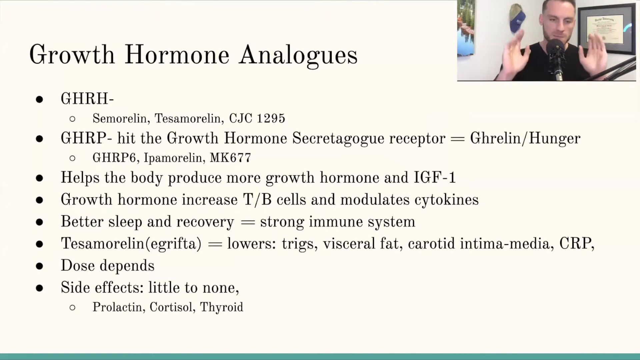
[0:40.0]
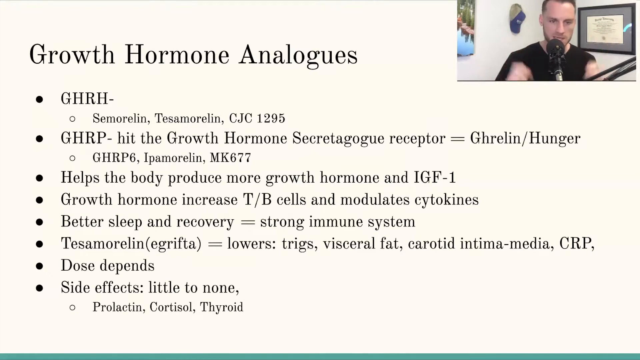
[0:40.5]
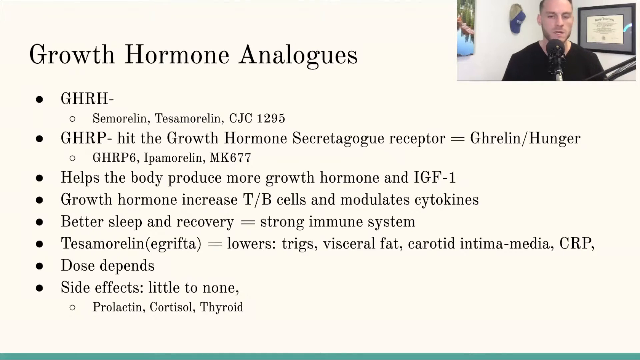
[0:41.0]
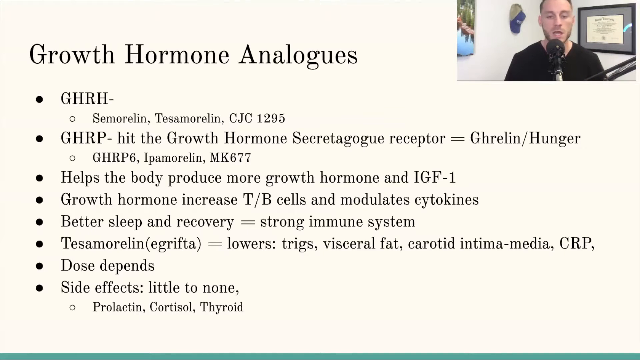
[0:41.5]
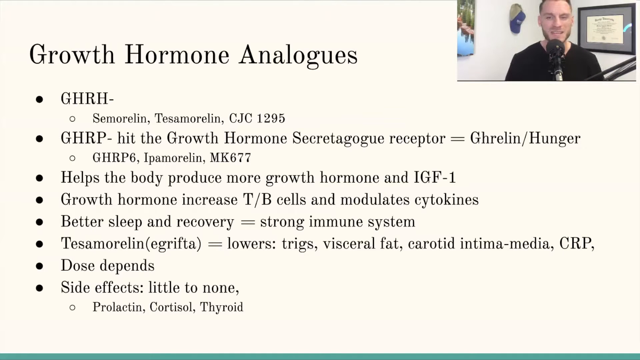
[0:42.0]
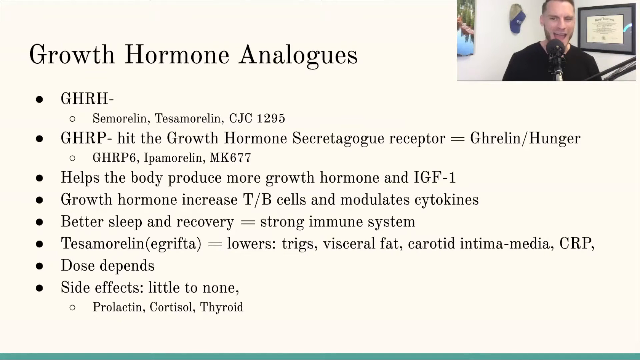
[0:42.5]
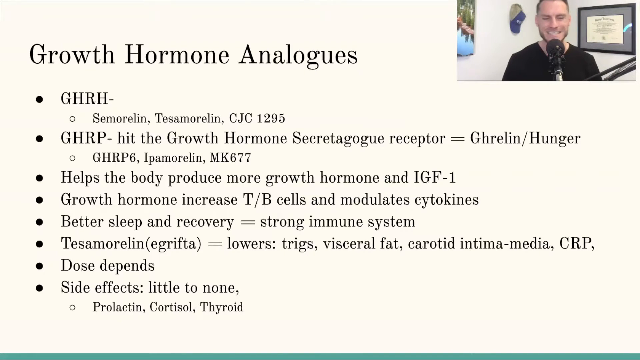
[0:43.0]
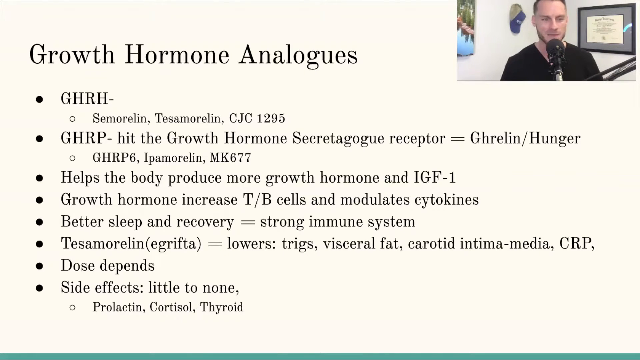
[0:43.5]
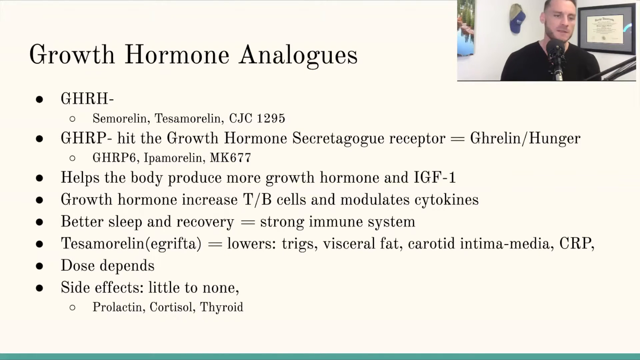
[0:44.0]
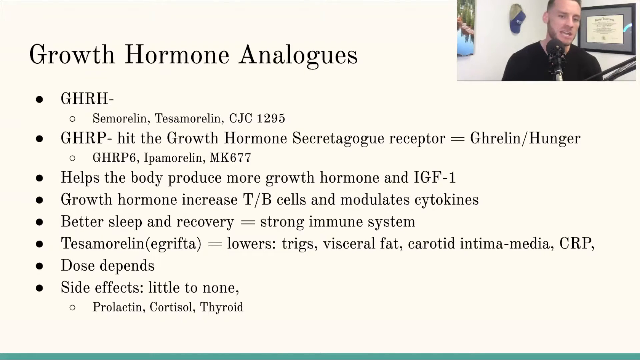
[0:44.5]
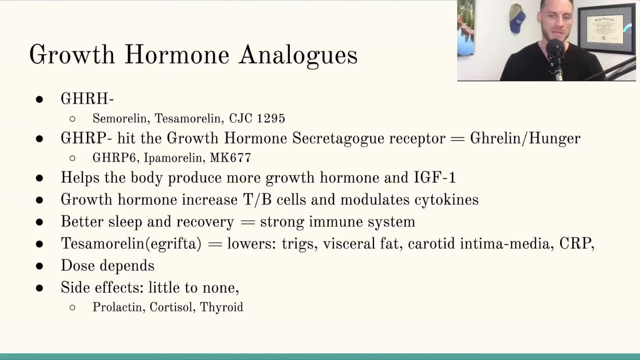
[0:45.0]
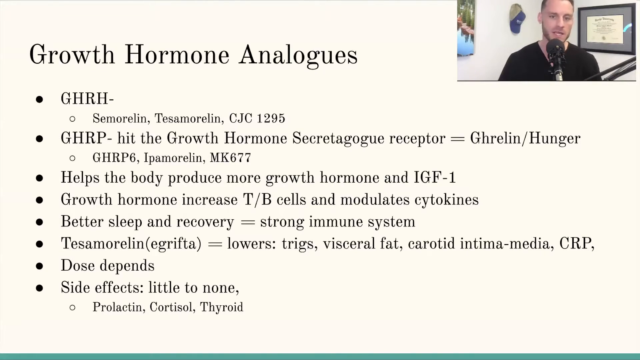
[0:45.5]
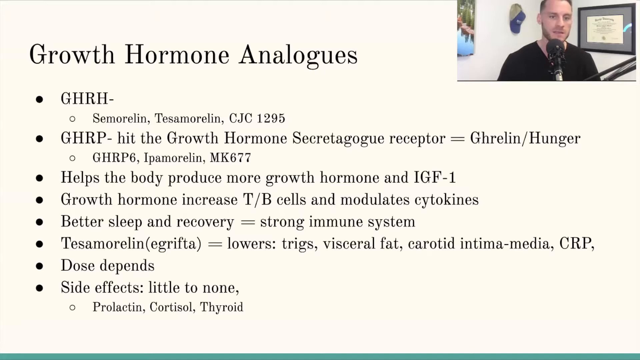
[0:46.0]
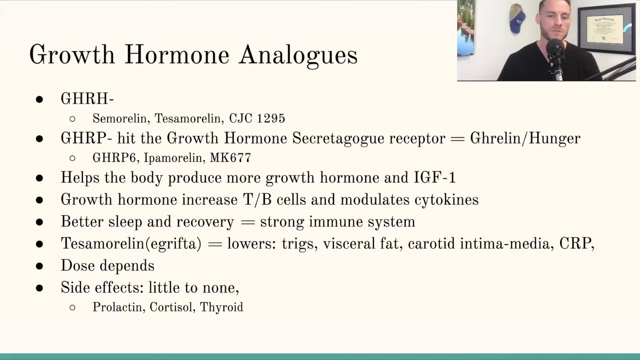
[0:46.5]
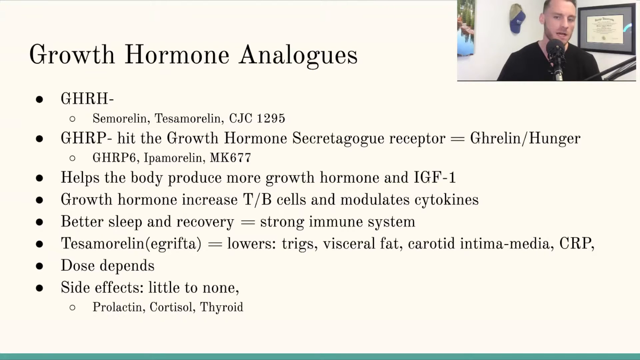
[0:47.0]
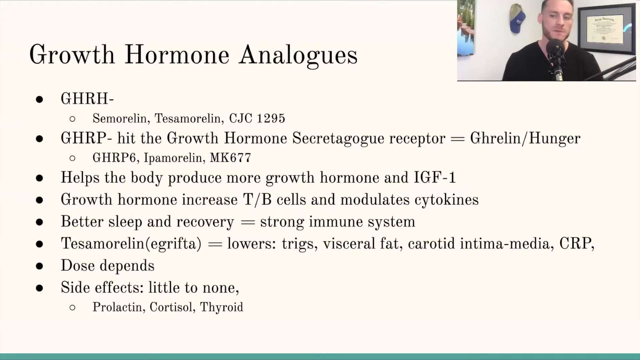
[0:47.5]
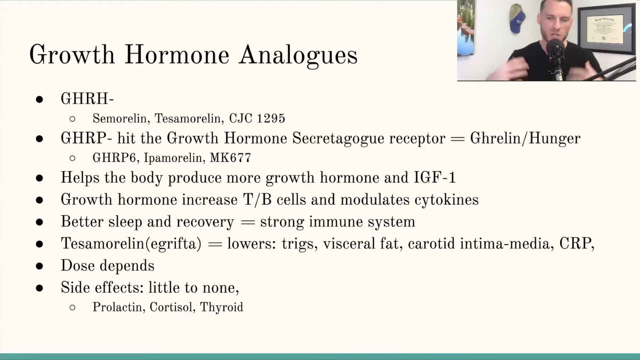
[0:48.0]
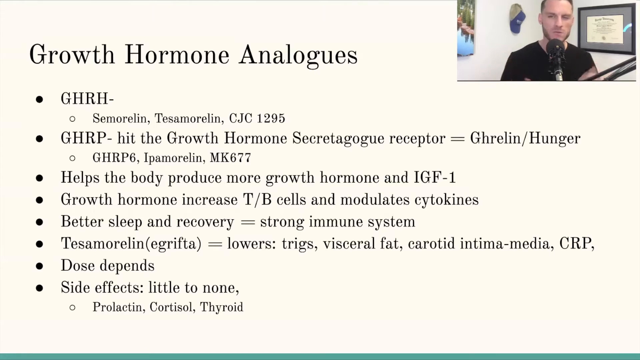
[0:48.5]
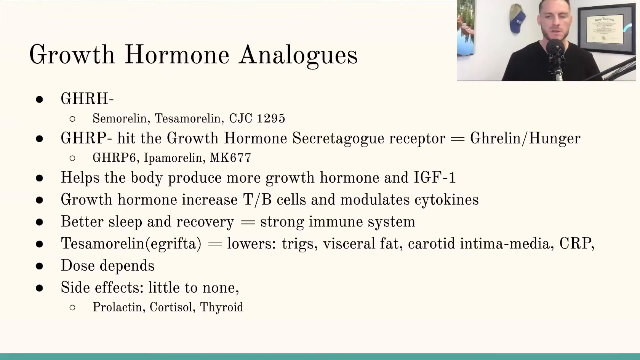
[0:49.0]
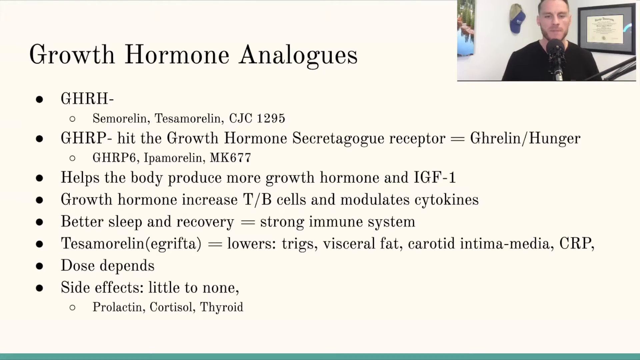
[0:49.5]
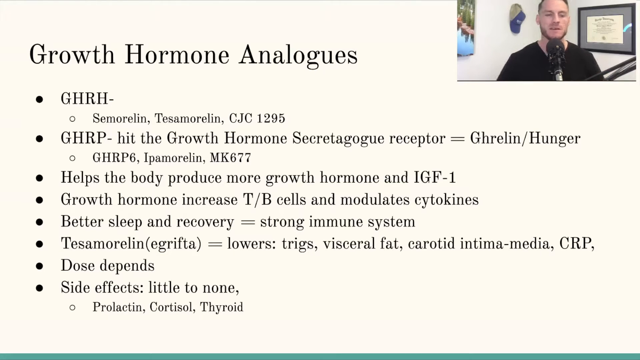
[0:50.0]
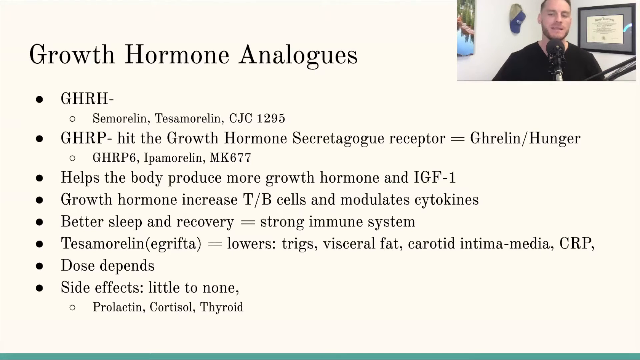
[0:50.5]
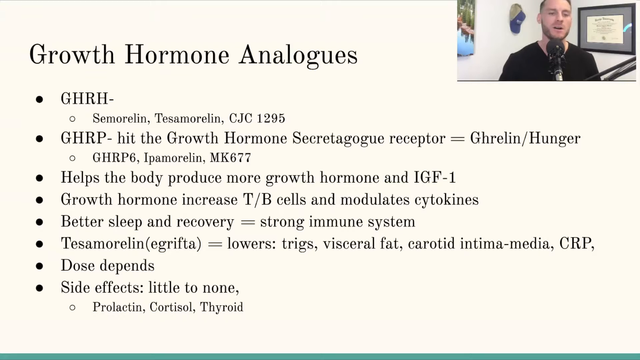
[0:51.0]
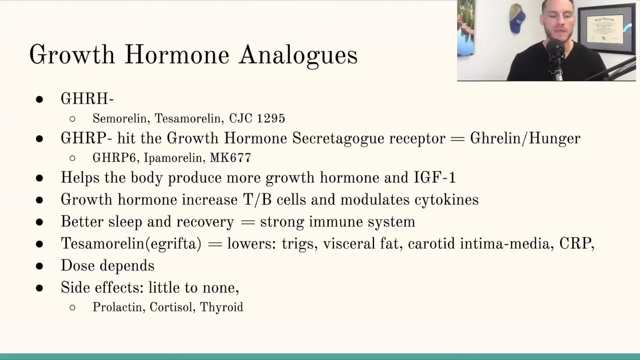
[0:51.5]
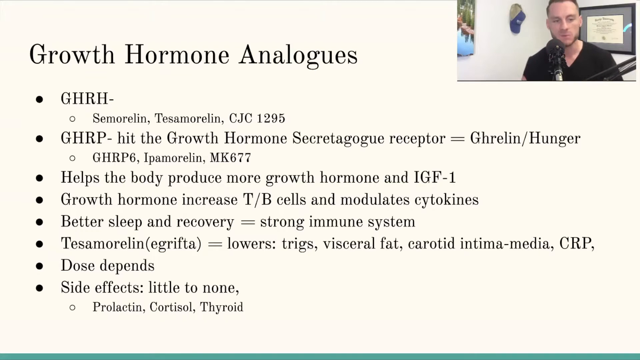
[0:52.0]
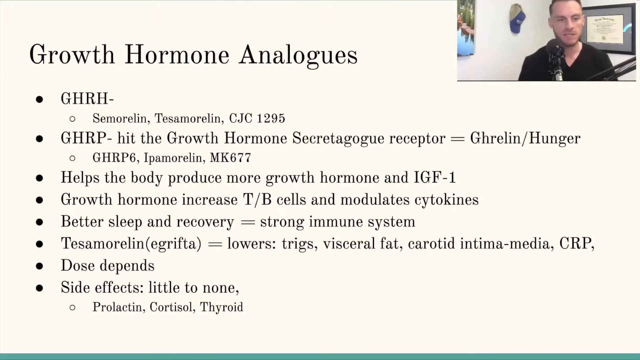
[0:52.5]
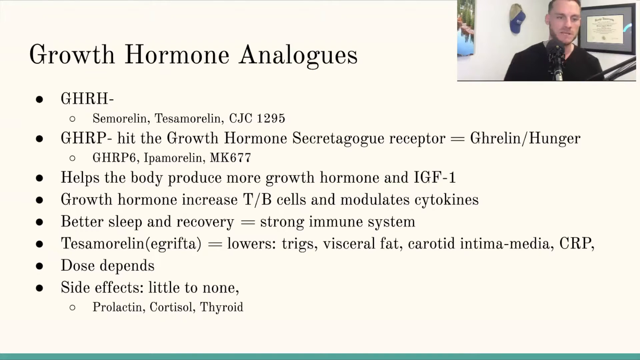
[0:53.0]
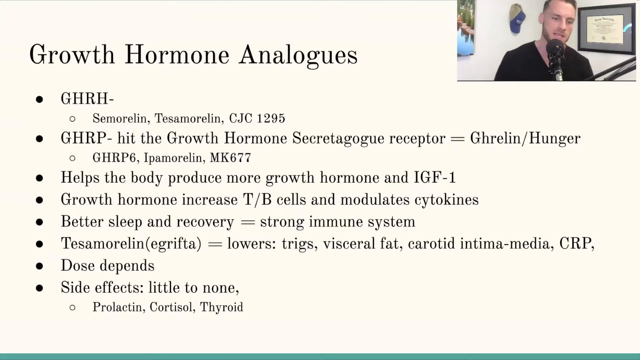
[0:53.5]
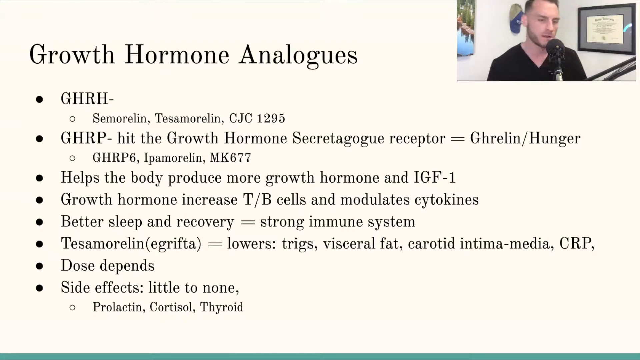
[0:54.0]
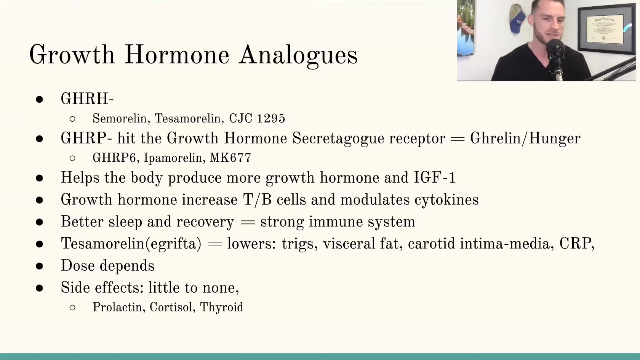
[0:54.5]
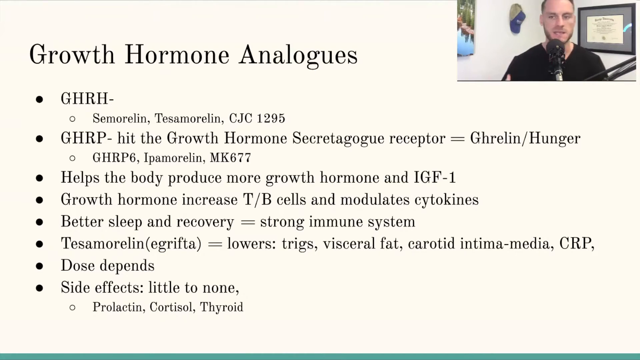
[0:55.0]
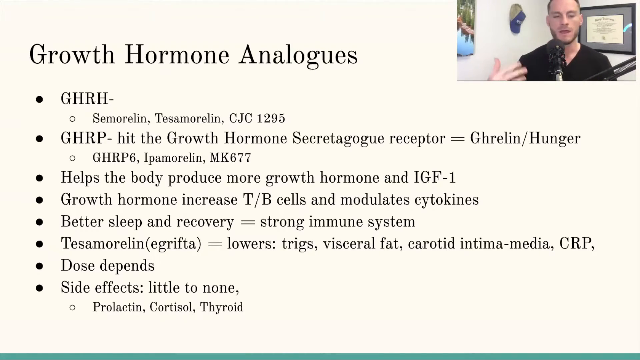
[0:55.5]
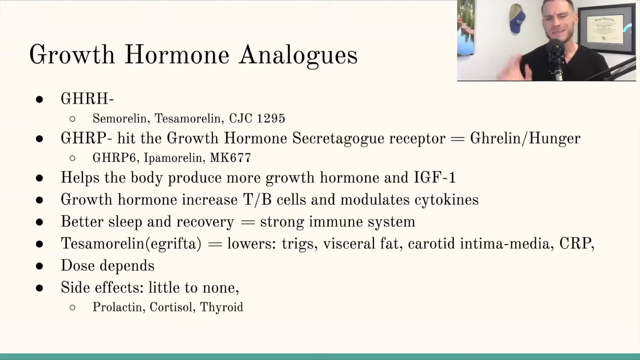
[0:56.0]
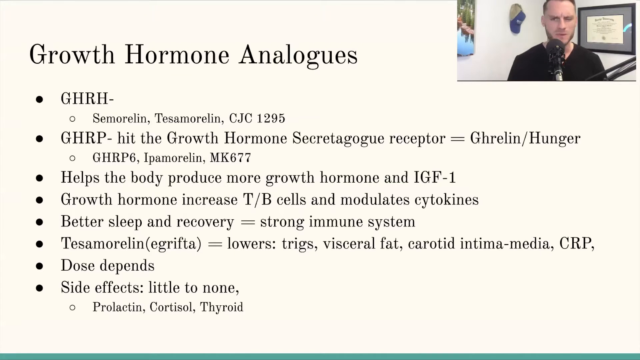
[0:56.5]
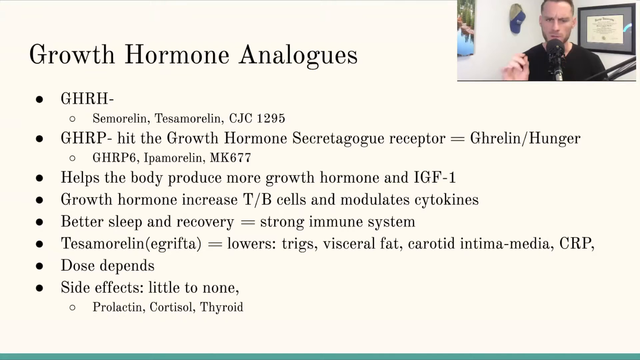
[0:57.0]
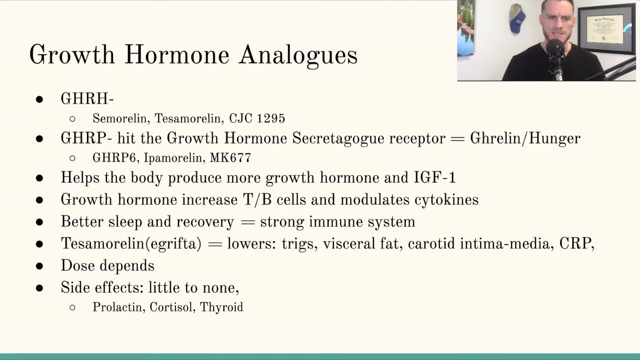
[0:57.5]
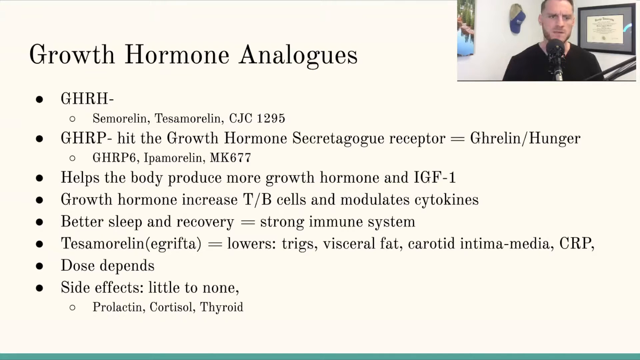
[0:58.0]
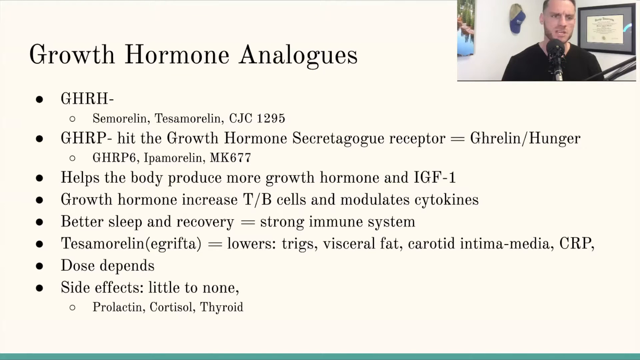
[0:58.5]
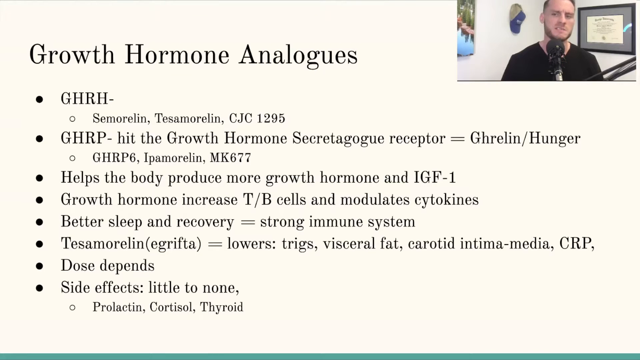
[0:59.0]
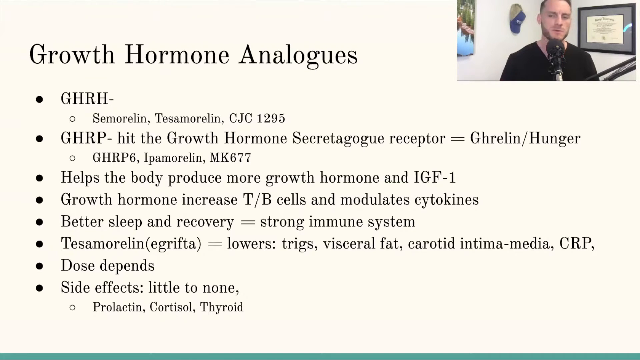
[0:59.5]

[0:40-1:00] The growth hormone analogues slide stays on screen for a long time. It holds many bullet points and claims, such as "helps the body produce more growth hormone and IGF-1" and "better sleep and recovery", and it appears to say that it lowers visceral fat. It also reads "increases T/B cells and modulates cytokines", along with other technical wording and acronyms.